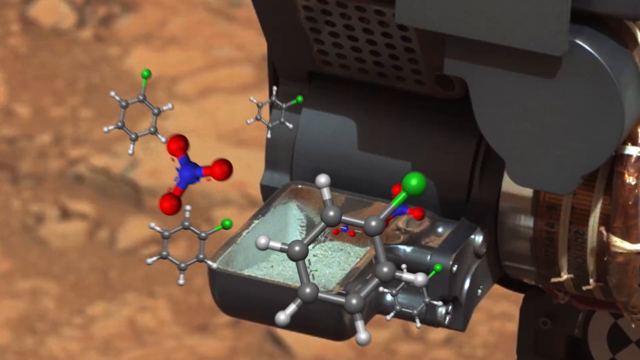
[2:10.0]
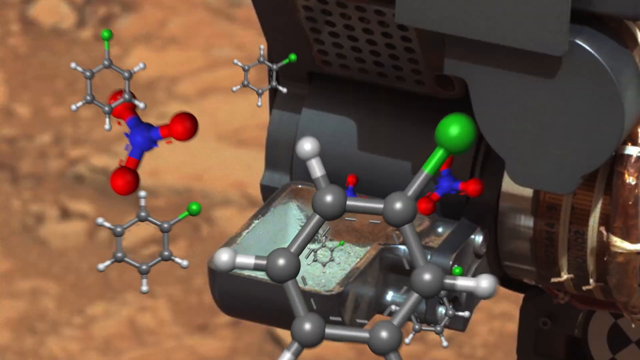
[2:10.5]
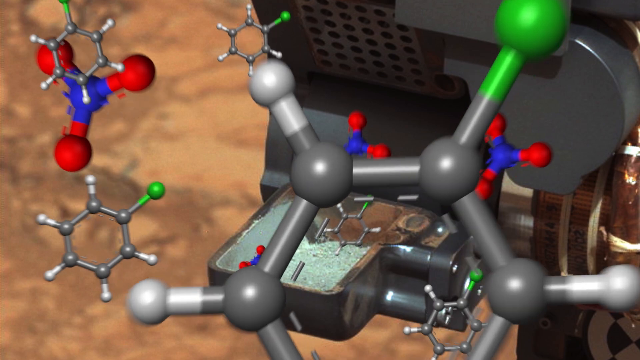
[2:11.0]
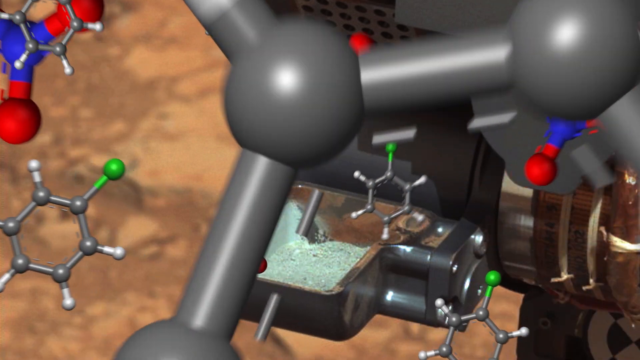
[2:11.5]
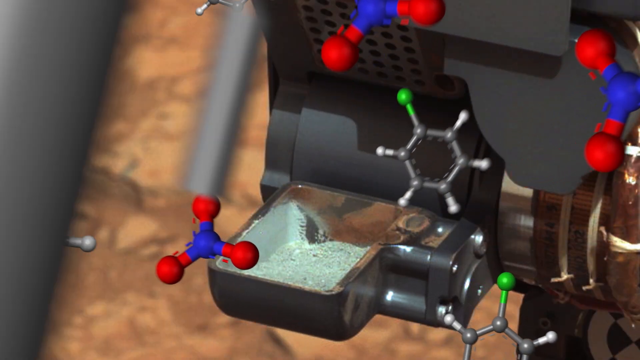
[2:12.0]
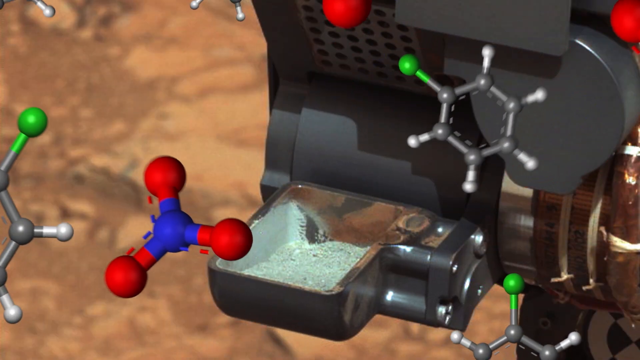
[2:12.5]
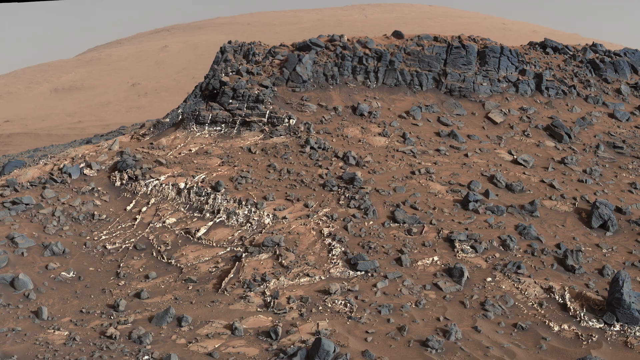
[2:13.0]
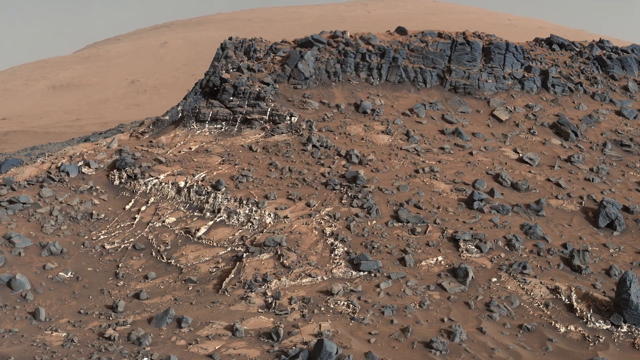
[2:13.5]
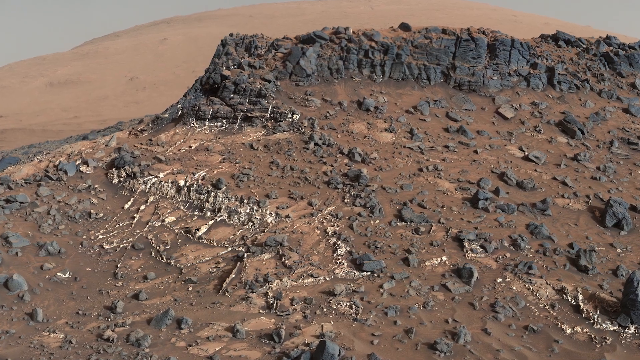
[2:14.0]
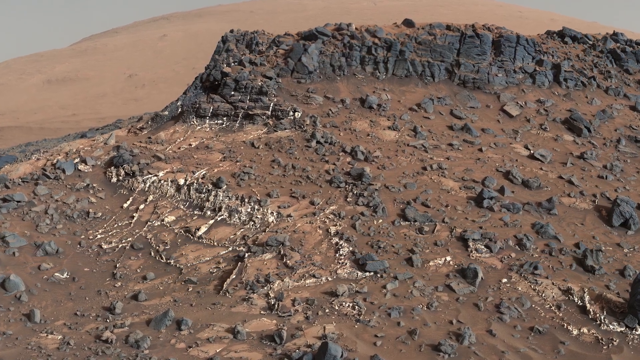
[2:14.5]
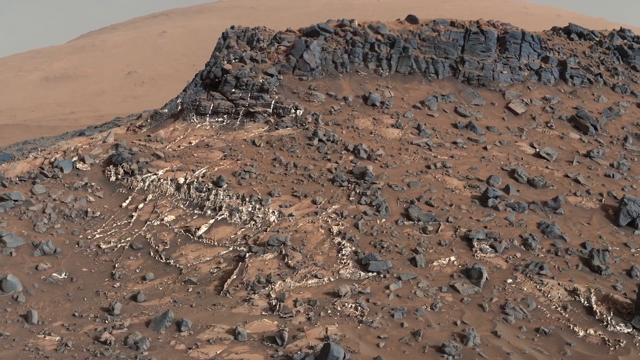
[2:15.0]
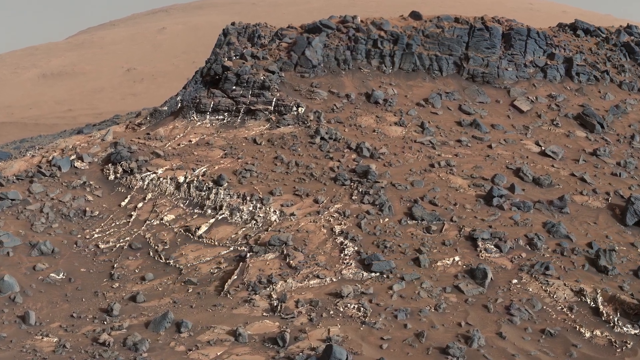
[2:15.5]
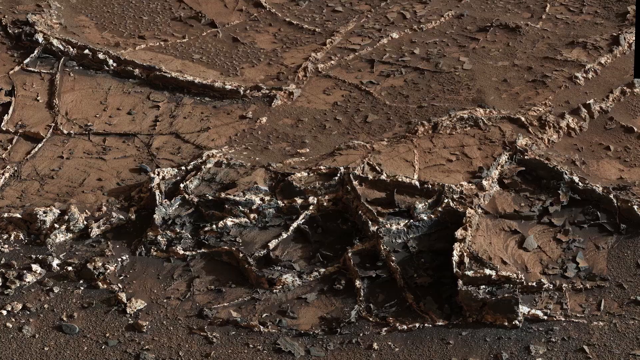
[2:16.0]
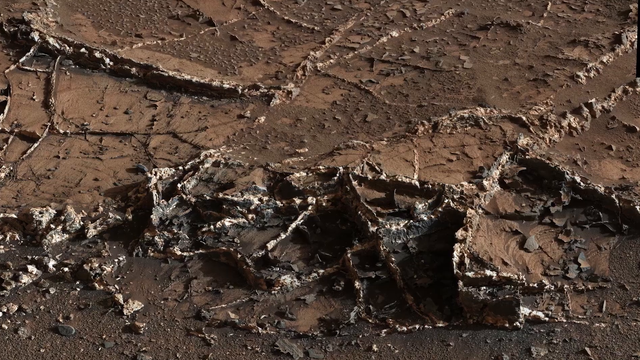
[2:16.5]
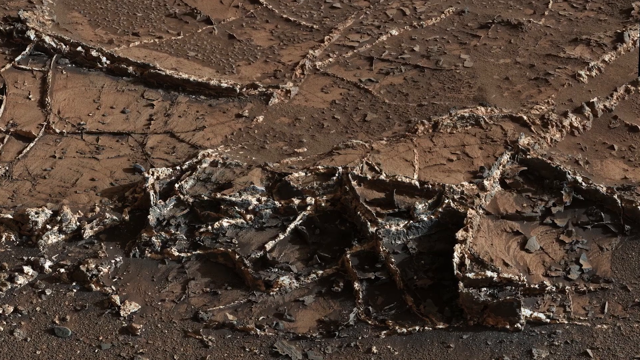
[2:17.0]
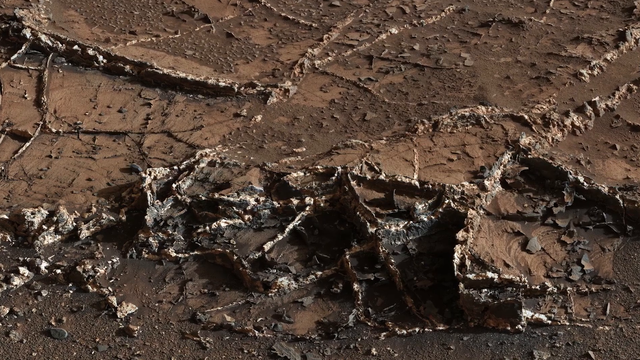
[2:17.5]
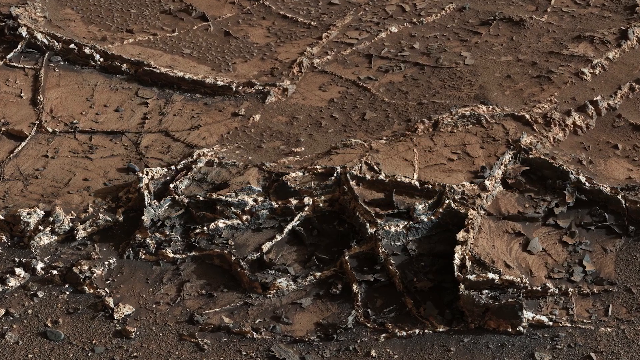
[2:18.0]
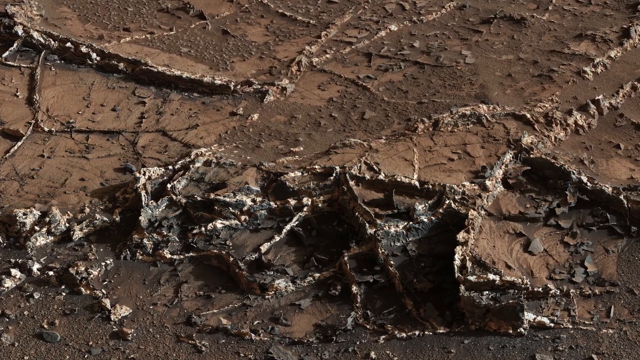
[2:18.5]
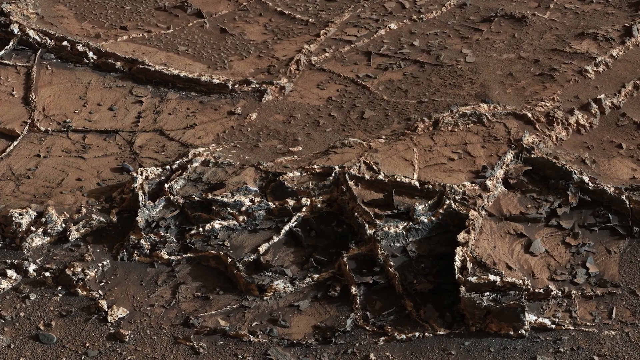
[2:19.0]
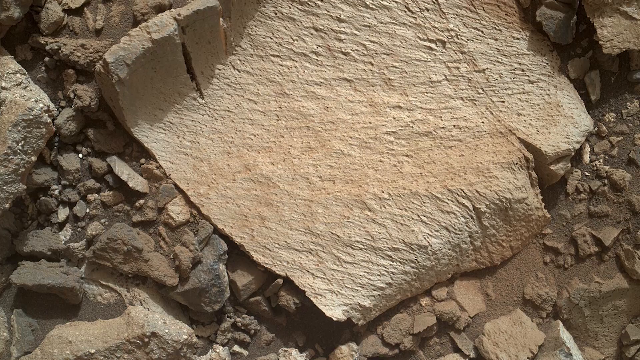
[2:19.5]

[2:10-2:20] The 3D molecules are kind of flying in toward the viewer, increasing in size and sort of increasing in detail as they appear to come toward the camera. They are different kinds of molecules, mostly gray in base with circular nodes at the ends that vary from green to red to blue. More images follow, likely taken by the rover. The first shows kind of a barren cliffside that appears rockier than the others, with many gray, jutting rocks coming out of its top, and what appear to be long, slim, light gray formations along the center-left of the terrain that almost look like bones, as if they were the spinal column and ribcage of a large, alien-like animal. More of these spindly formations follow, almost root-like as they reach out through the rocky terrain. The final picture is a close-up of a large, light gray rock that is rounded on the sides and kind of flat and curved at the top.